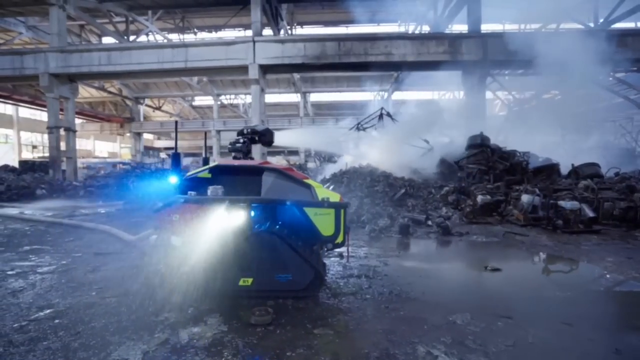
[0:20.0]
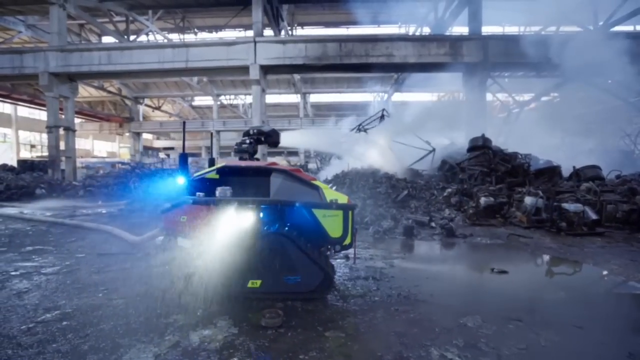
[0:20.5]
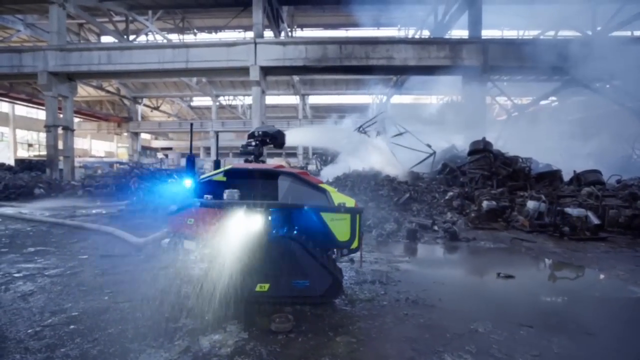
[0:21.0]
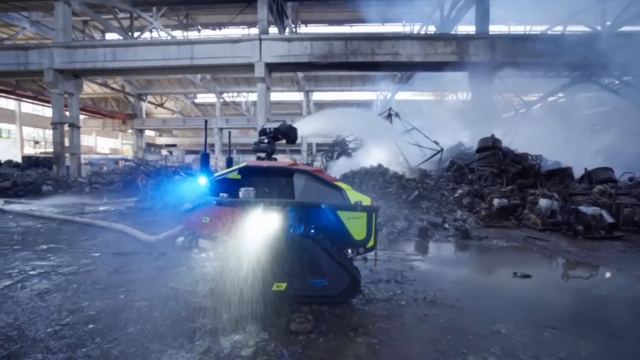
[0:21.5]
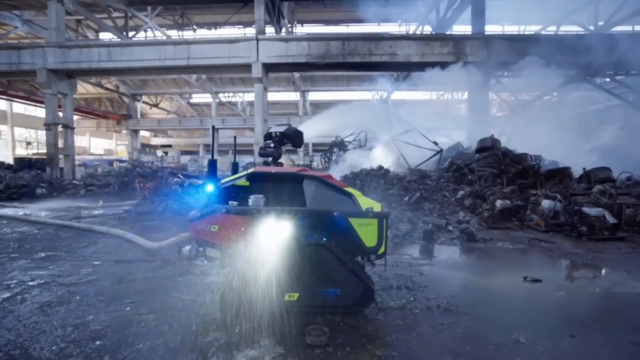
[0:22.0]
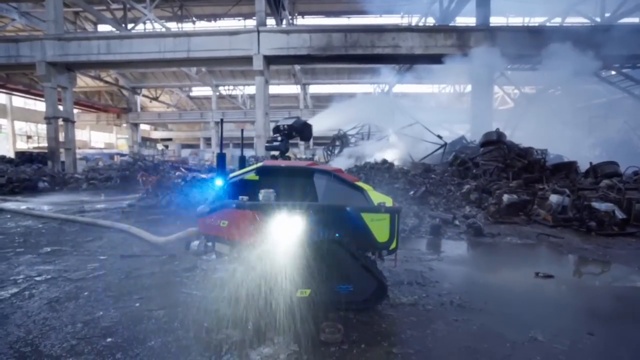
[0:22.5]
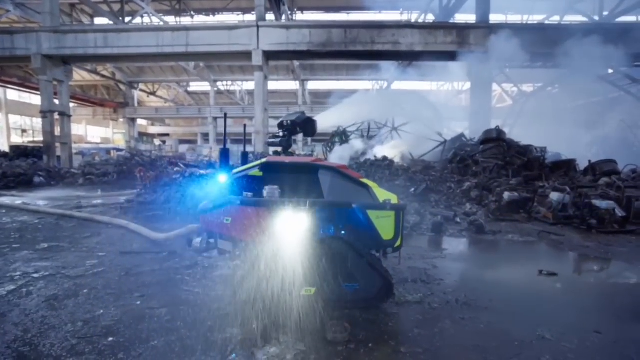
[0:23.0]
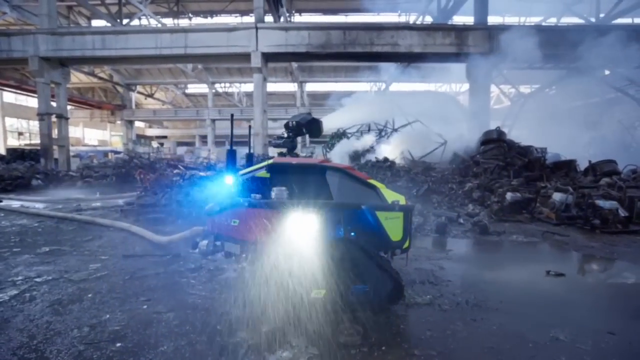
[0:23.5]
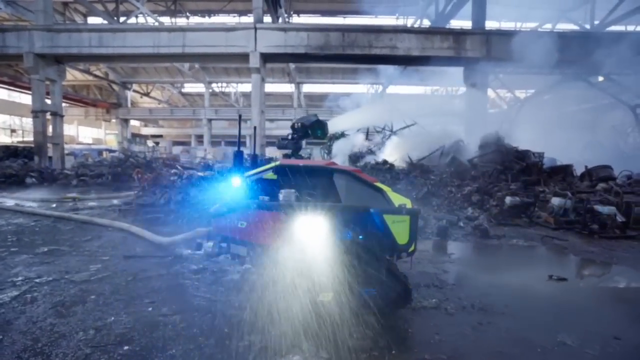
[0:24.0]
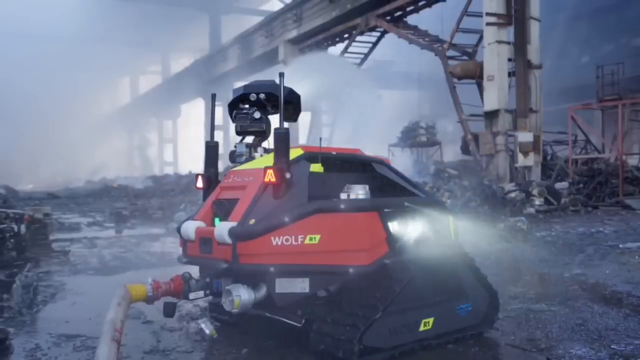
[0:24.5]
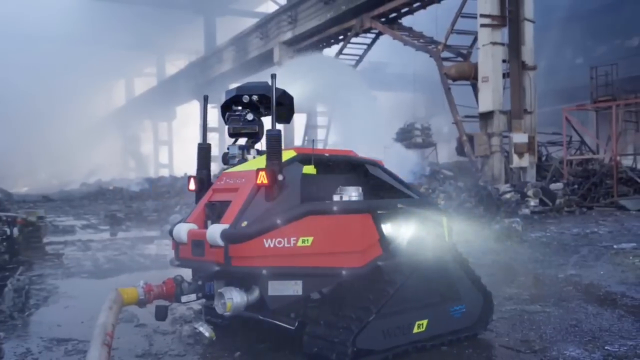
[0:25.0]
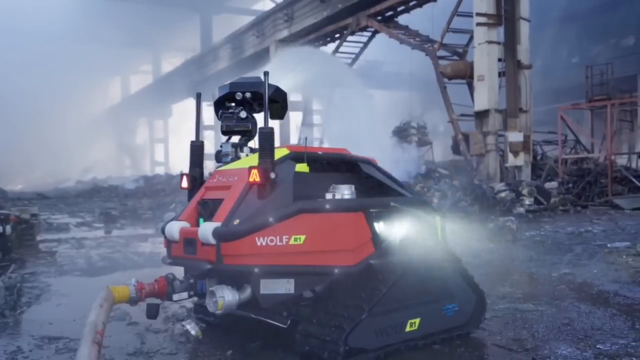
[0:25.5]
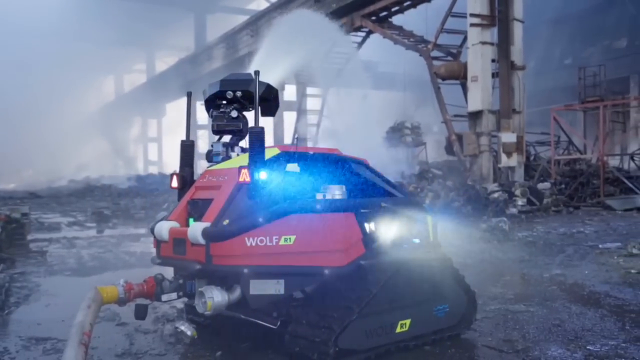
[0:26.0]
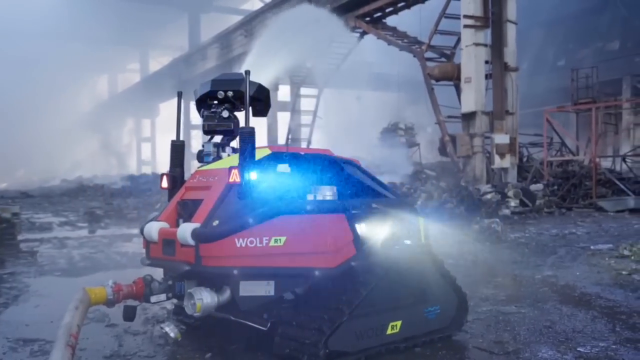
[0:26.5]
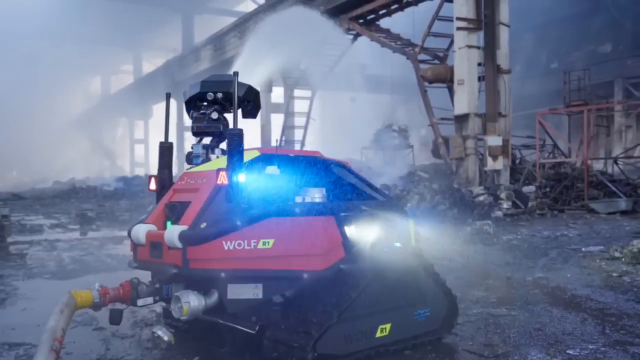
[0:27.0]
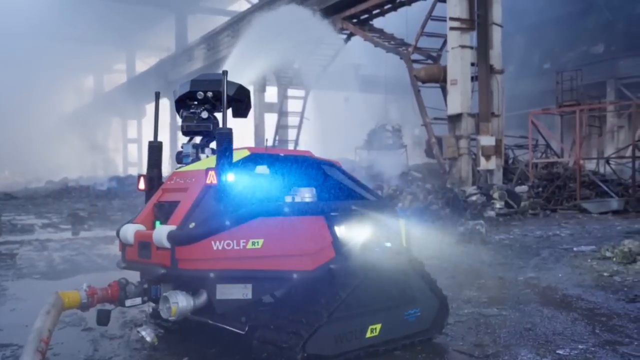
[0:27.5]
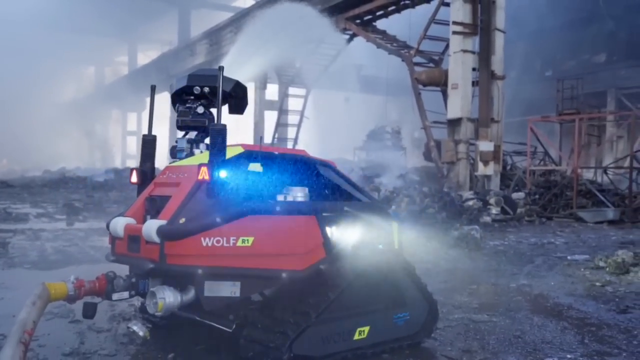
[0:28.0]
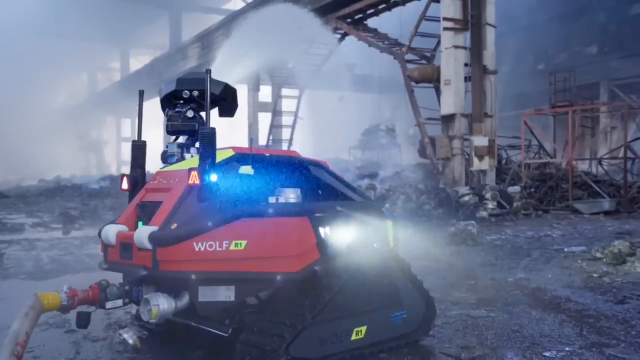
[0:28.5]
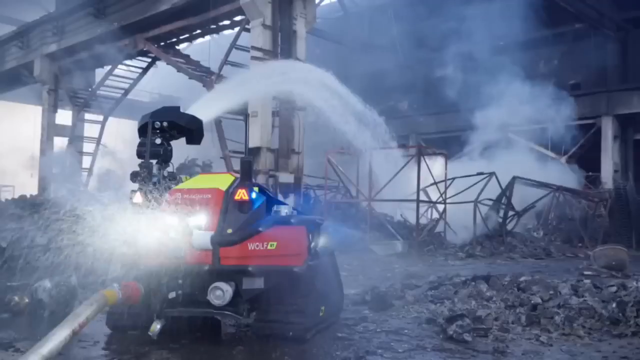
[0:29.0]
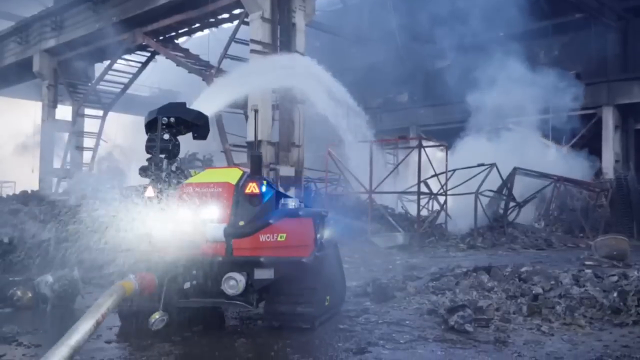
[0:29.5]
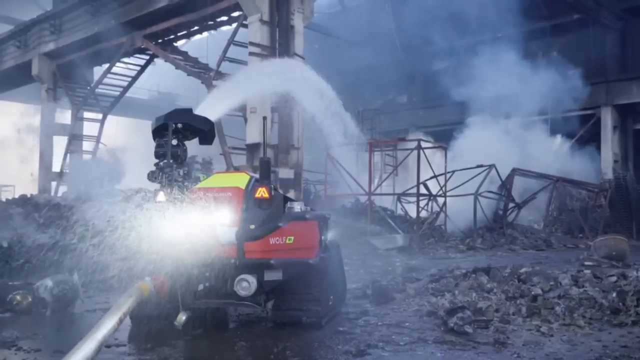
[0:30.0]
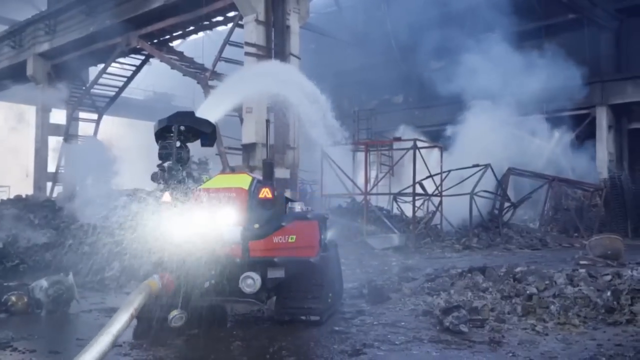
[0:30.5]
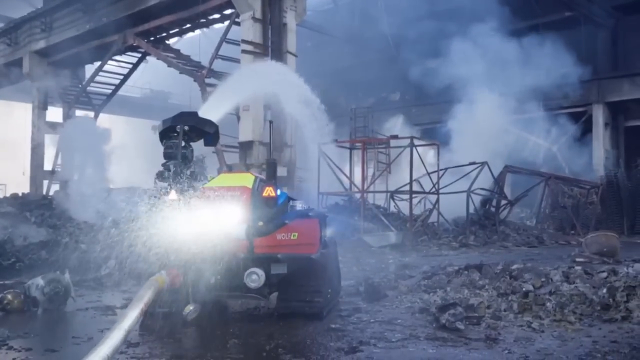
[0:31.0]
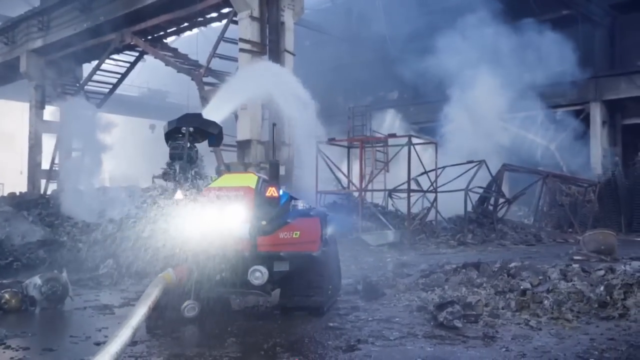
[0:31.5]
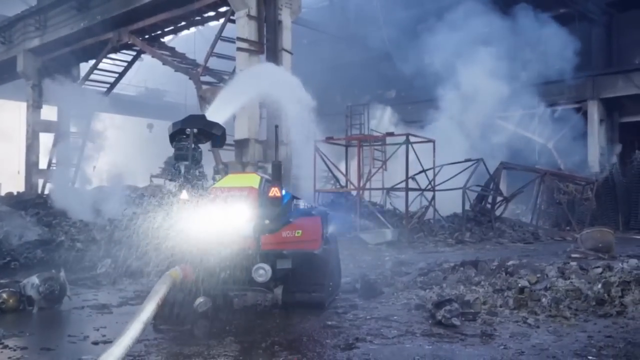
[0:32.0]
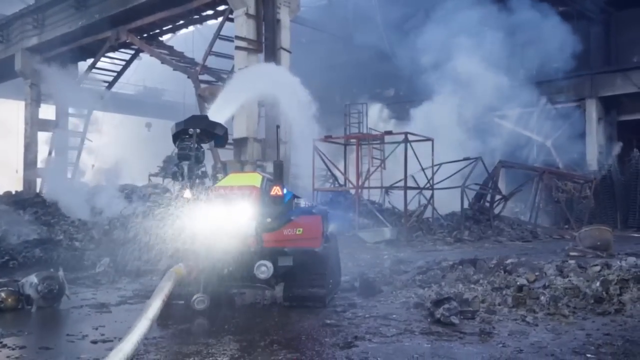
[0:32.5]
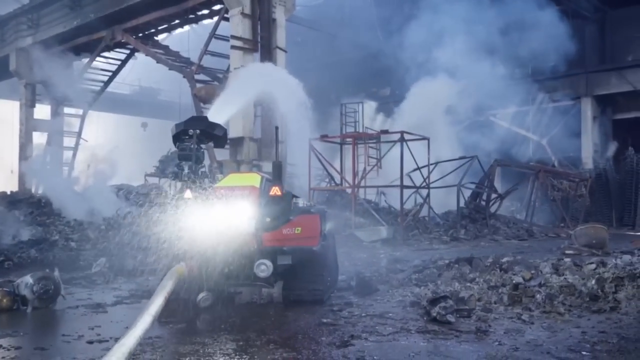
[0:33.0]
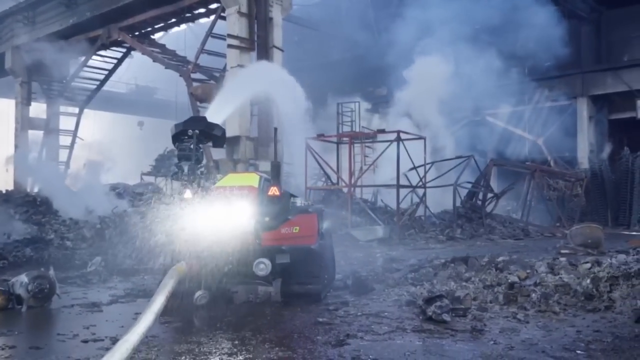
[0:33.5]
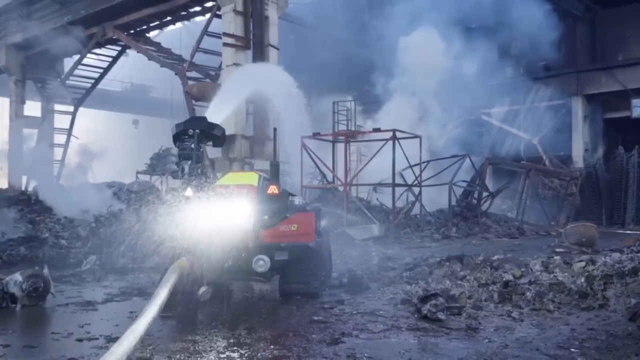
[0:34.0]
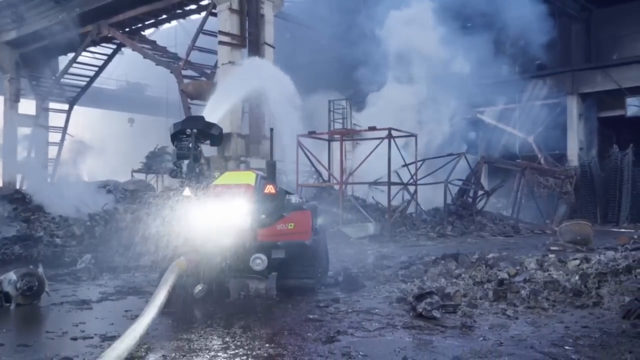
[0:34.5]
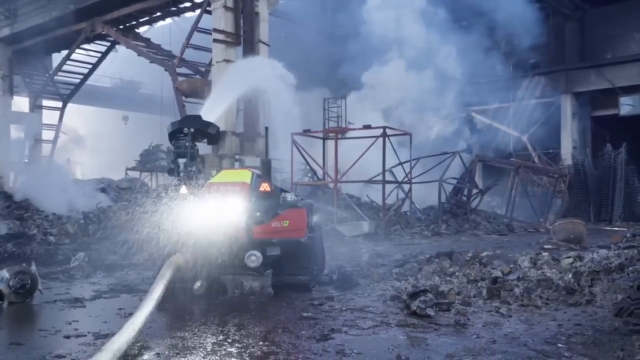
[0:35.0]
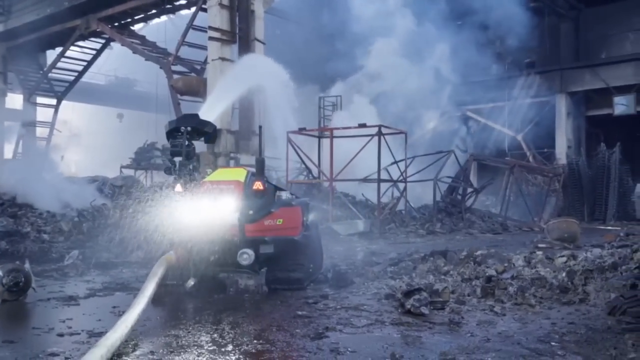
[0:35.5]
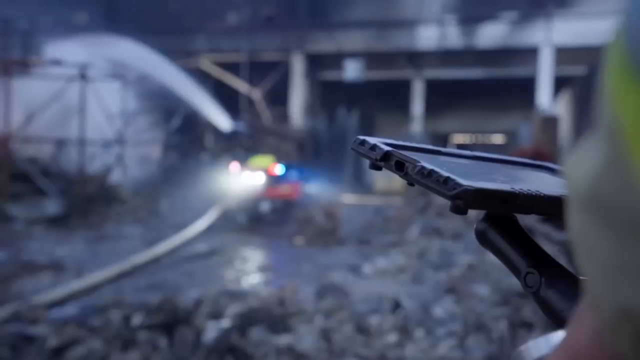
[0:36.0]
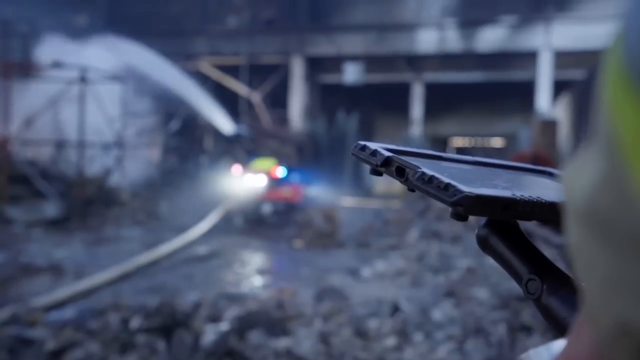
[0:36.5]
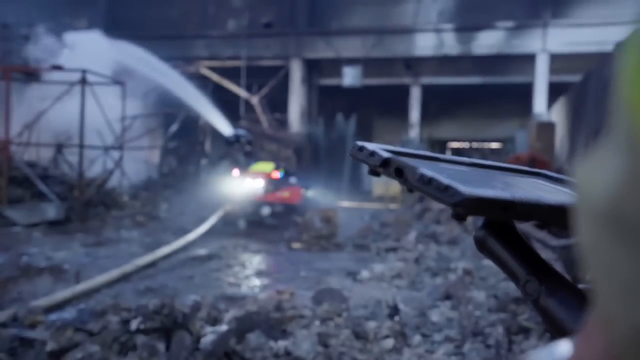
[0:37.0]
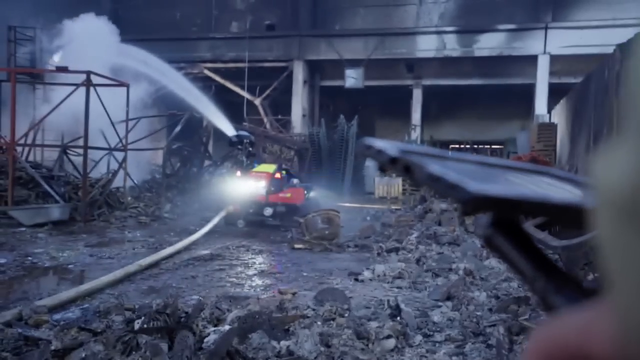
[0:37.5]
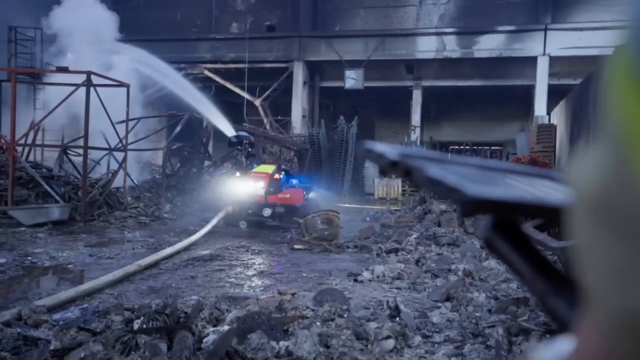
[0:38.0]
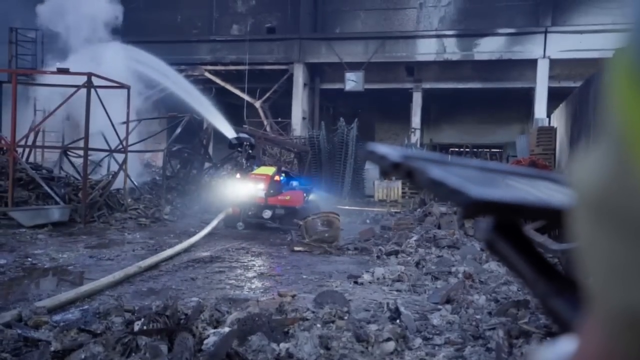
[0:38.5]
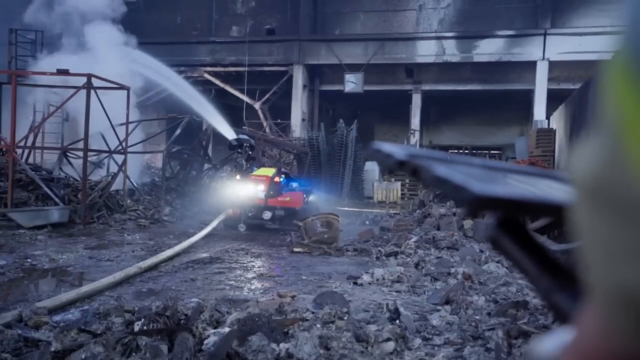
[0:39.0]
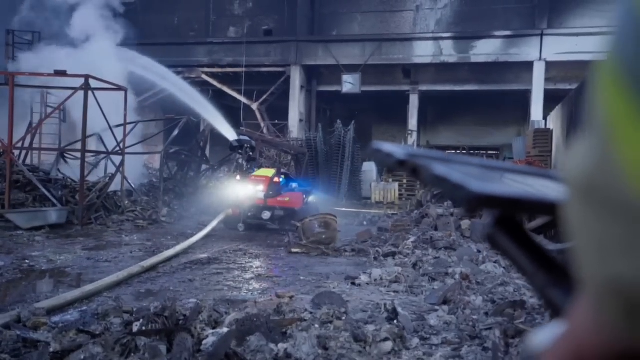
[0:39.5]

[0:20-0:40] At the scene of what looks like a fire incident, flame is still rising as the fire is being put out. There seems to be an individual controlling the tiny vehicle, directing where it goes and where it sprinkles water. The structure, possibly a factory or industrial area, has what looks like pillars everywhere; it may be outdoors or could be a car park. The vehicle is branded "wolf". The area is wet and cloudy, and visibility is quite poor. The fire seems to have been put out, with the activity winding down.